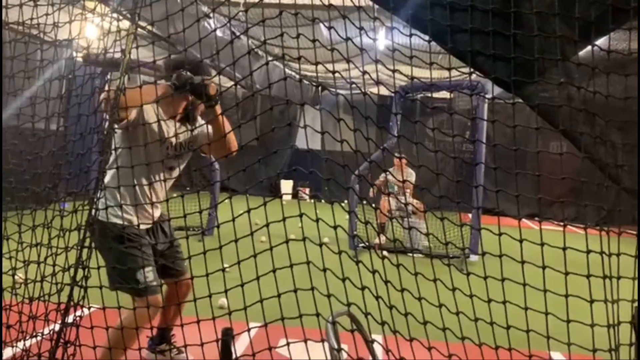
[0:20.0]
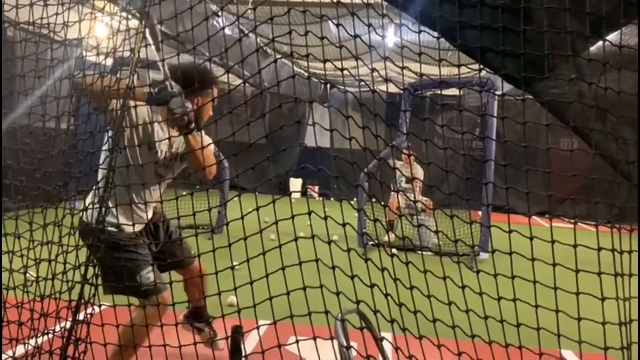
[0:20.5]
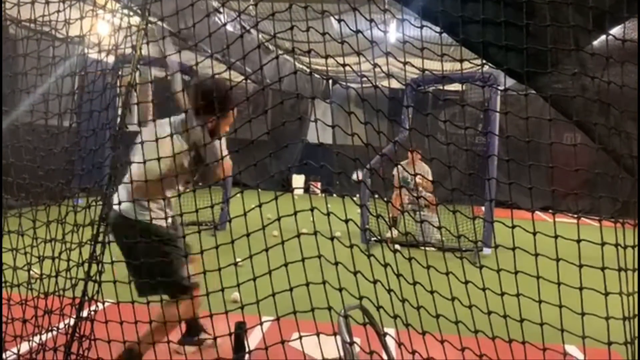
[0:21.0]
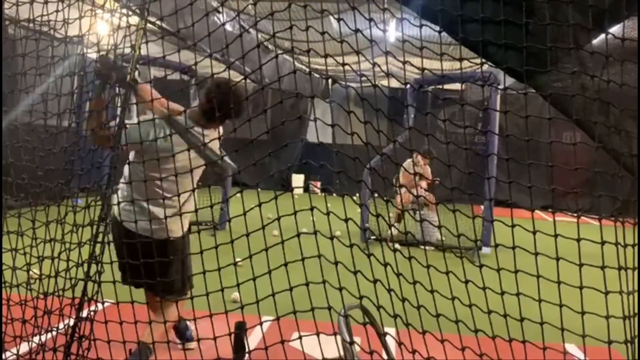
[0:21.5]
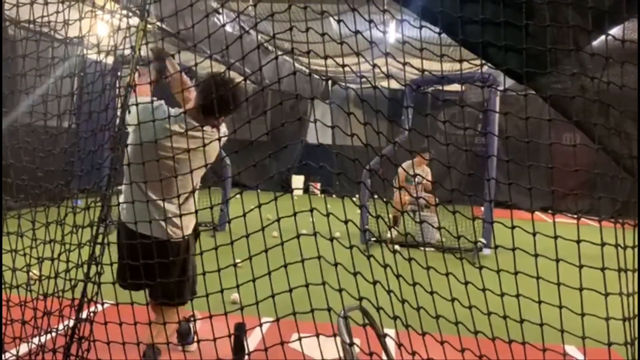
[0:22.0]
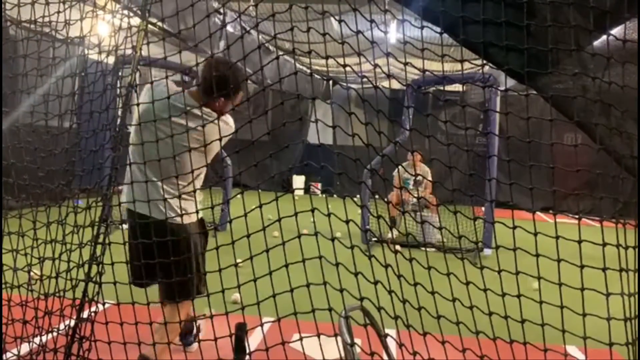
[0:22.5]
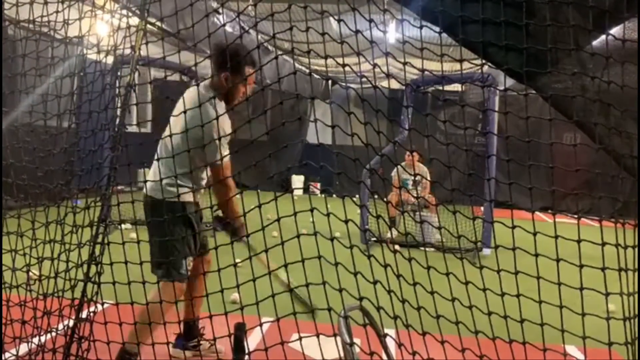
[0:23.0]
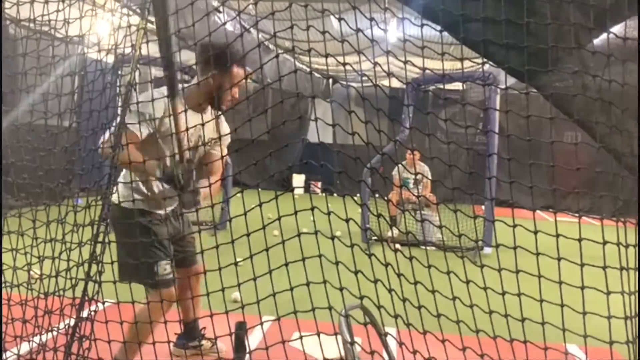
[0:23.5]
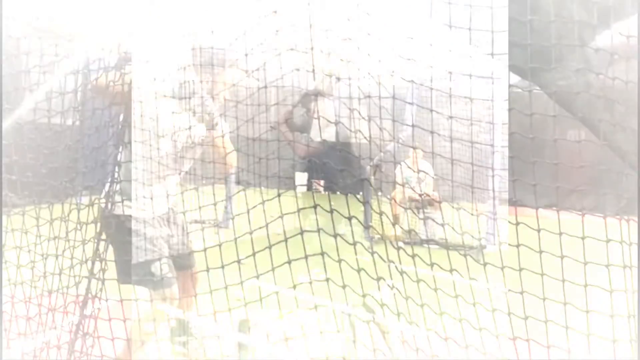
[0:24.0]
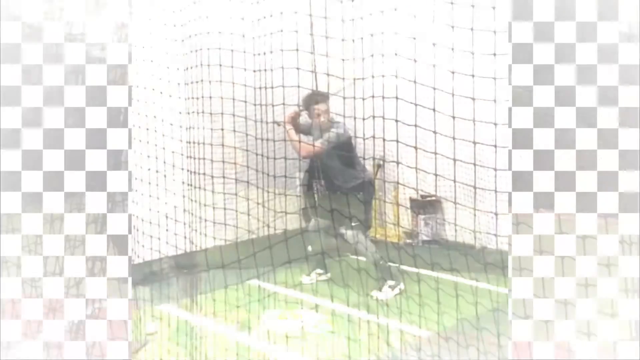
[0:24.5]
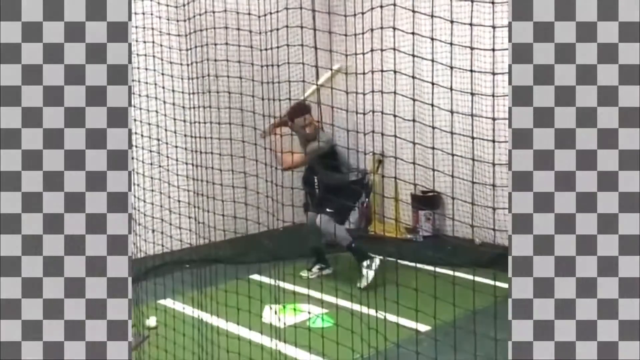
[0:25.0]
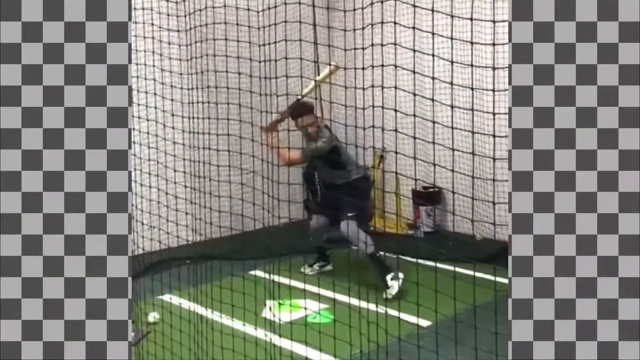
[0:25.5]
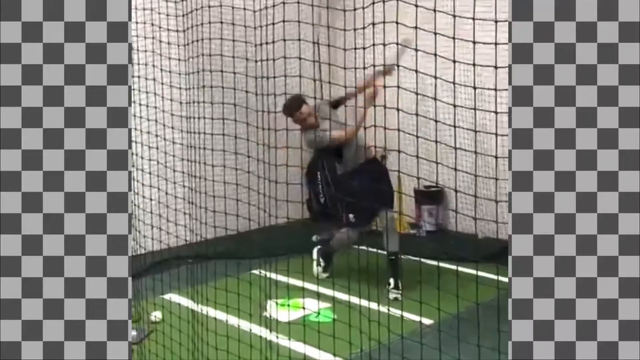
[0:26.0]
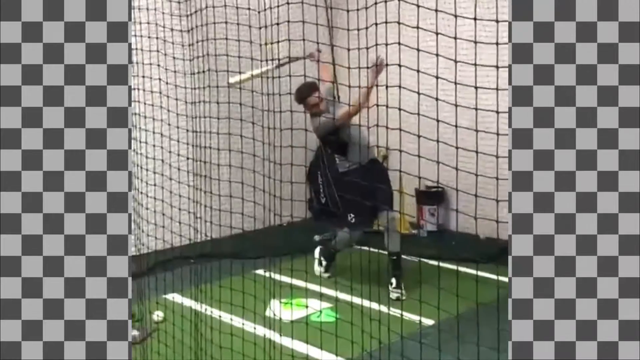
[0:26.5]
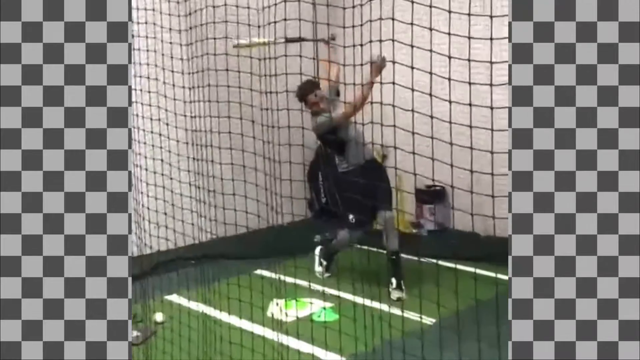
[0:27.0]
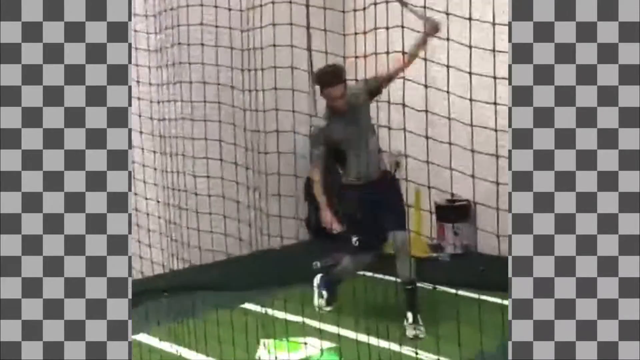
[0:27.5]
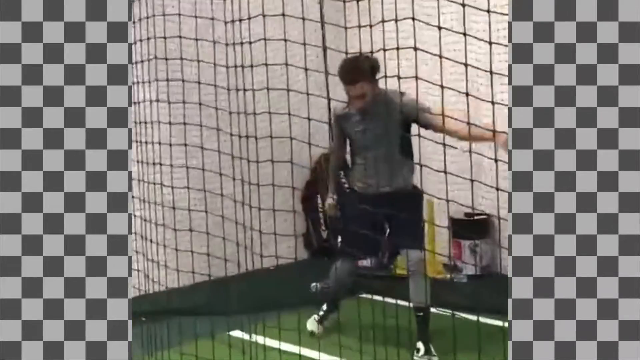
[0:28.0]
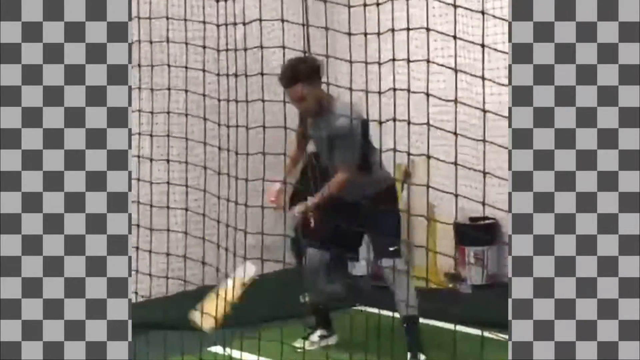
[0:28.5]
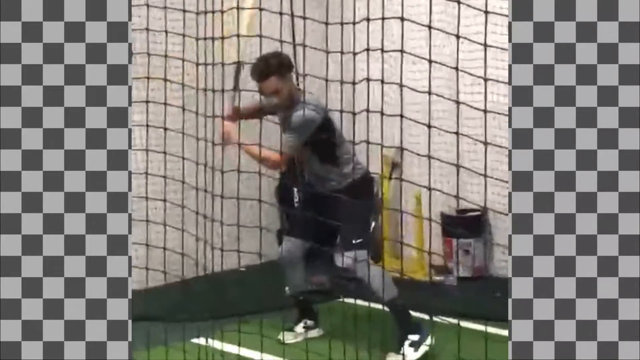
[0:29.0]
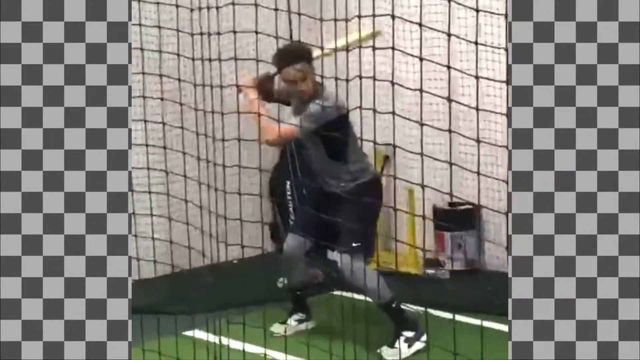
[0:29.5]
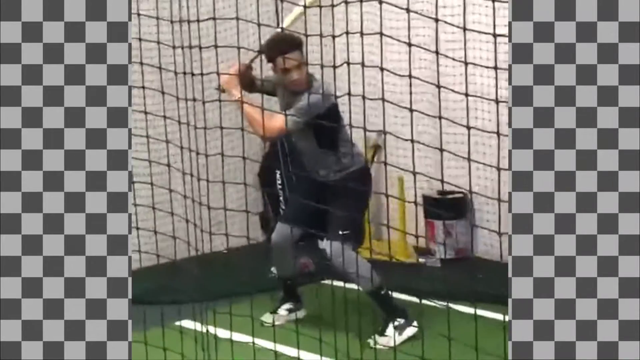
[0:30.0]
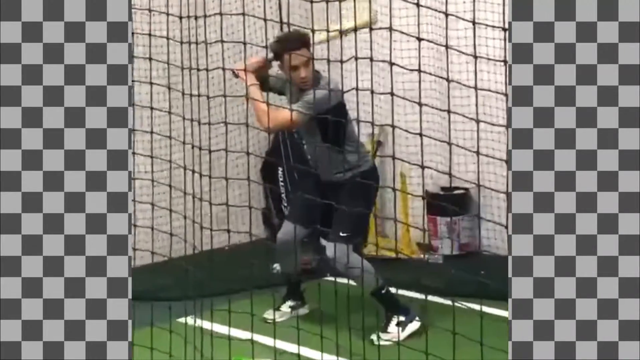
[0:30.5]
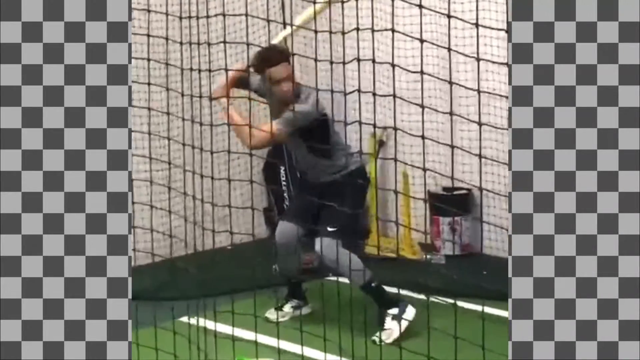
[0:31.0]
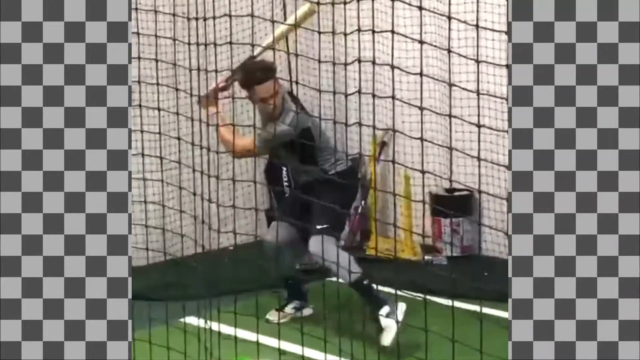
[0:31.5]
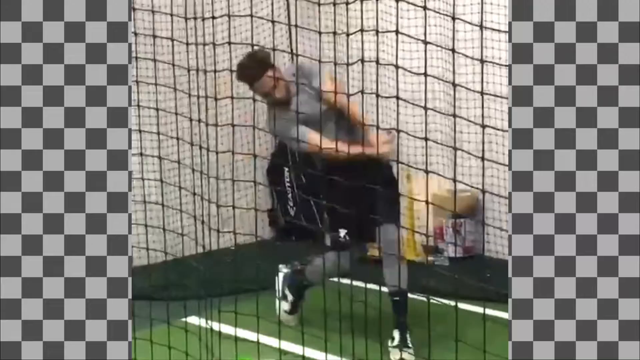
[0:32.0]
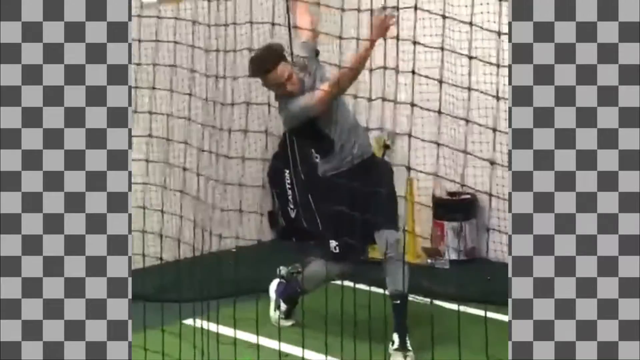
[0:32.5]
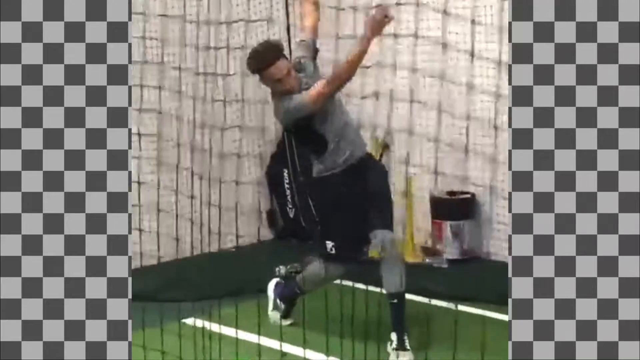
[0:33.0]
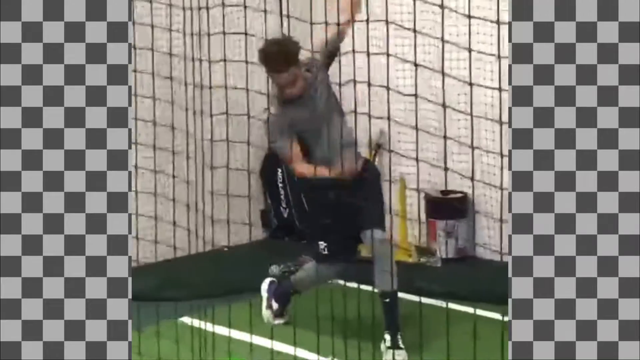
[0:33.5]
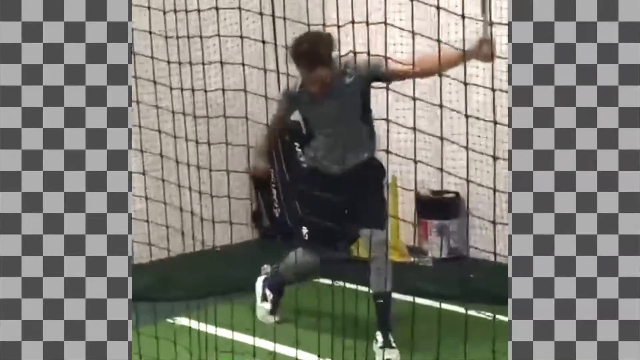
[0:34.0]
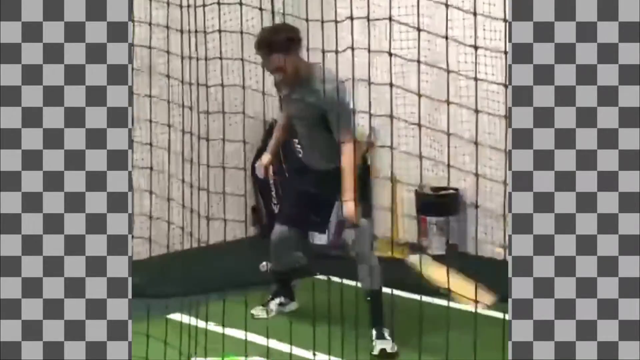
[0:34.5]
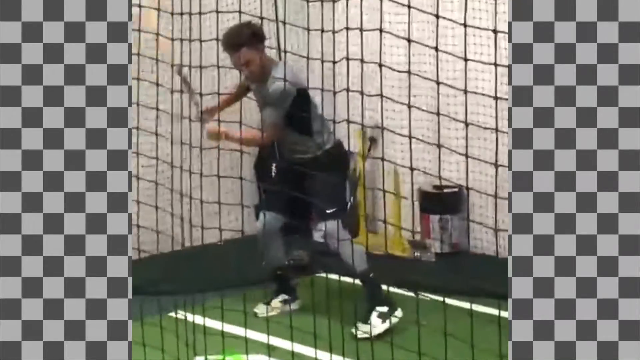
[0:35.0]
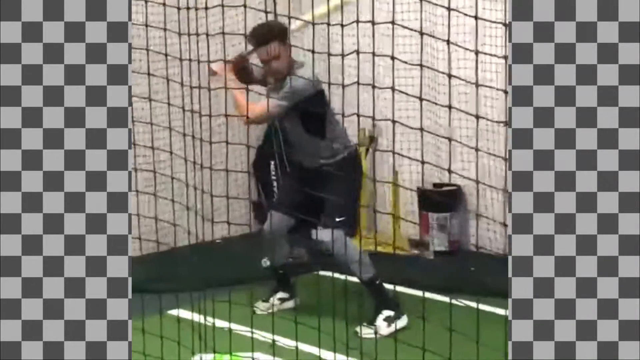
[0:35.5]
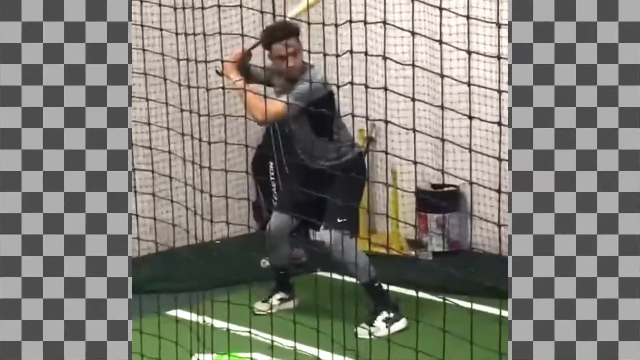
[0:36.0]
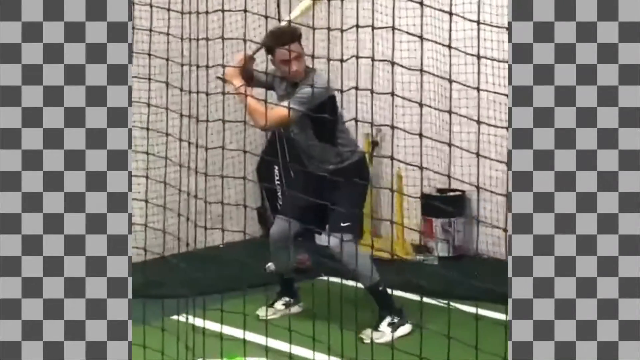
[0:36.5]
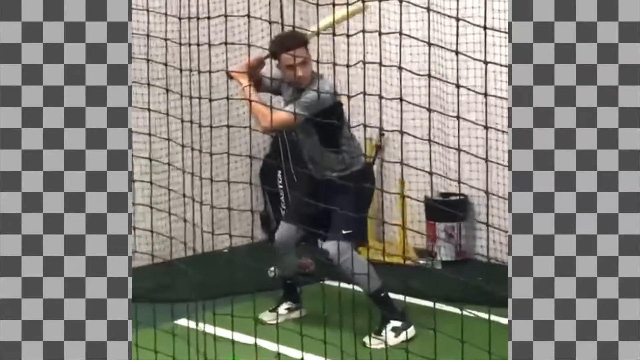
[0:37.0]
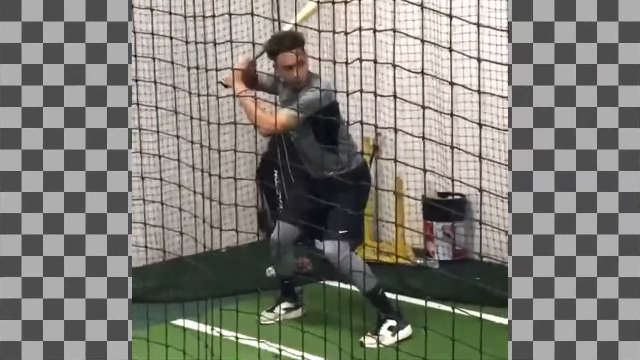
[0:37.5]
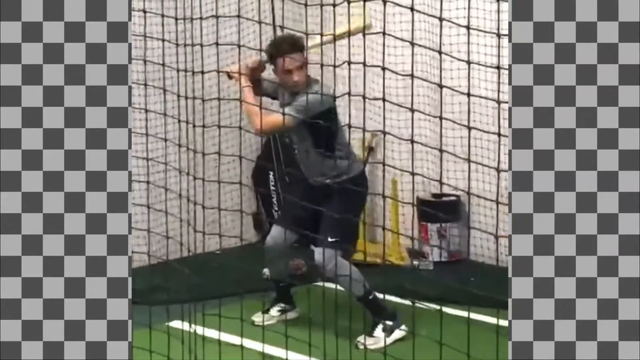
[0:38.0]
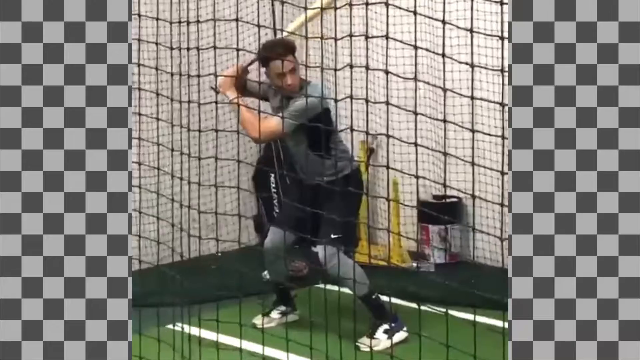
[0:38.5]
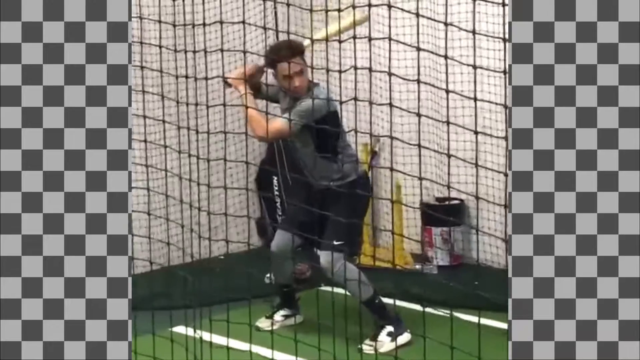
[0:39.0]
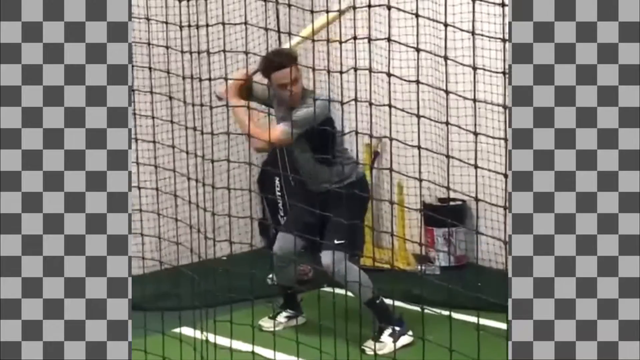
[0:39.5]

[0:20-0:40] A baseball player bats inside what looks like a caged cloth area. As he hits, he swings the bat around smoothly and then puts both arms out toward the back. A man pitching to him sits inside a sort of protective area, yet when the batter hits one ball hard and far, the ball seems to hit him. The batter is African American, with dark curly black hair, and wears a white t-shirt and black shorts. The bat is up over his shoulder, and he is probably right-handed. The pitcher's area looks roughly rectangular but extends out on one side, and it has protective gear around it that looks like padding.